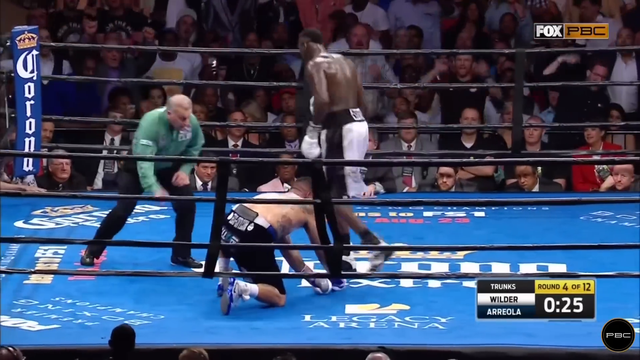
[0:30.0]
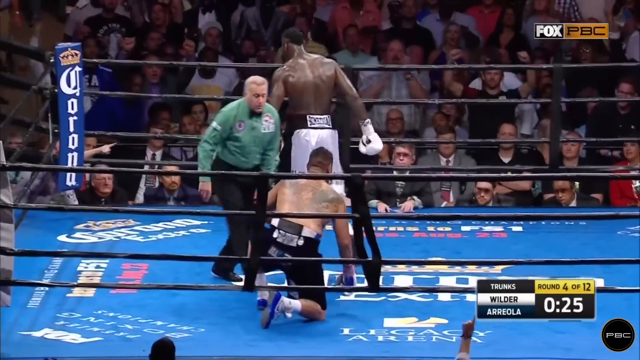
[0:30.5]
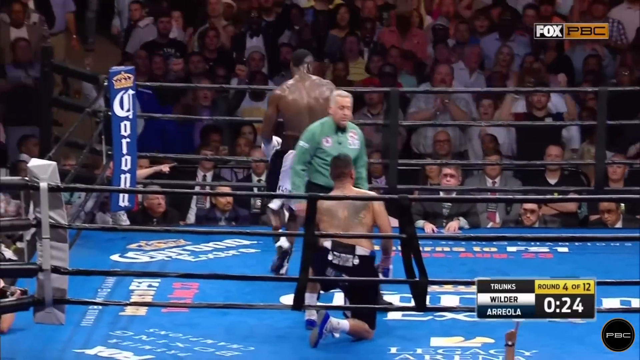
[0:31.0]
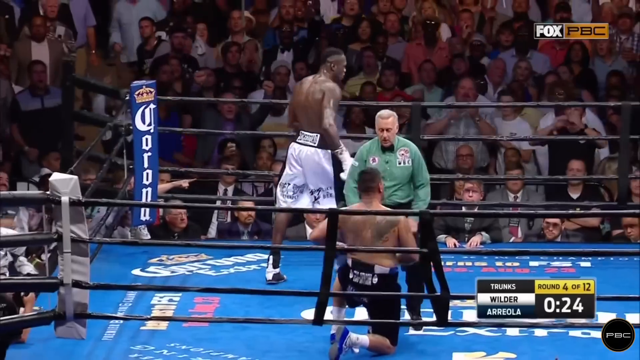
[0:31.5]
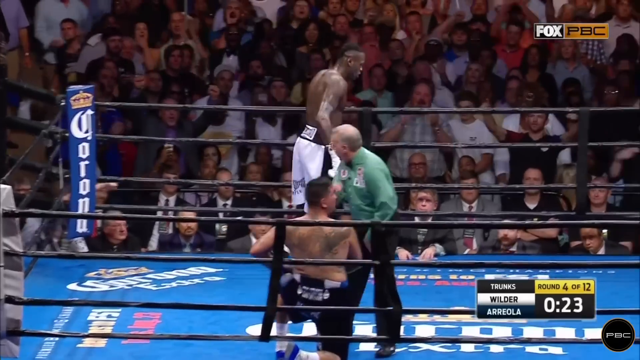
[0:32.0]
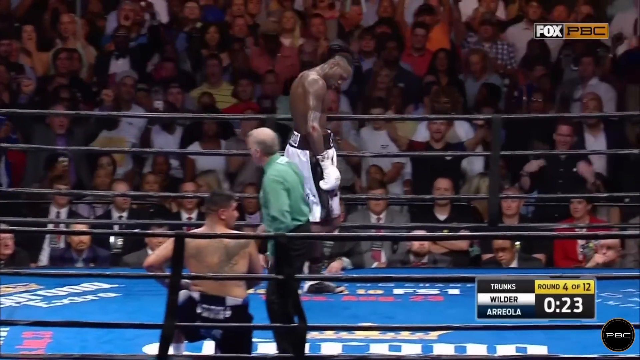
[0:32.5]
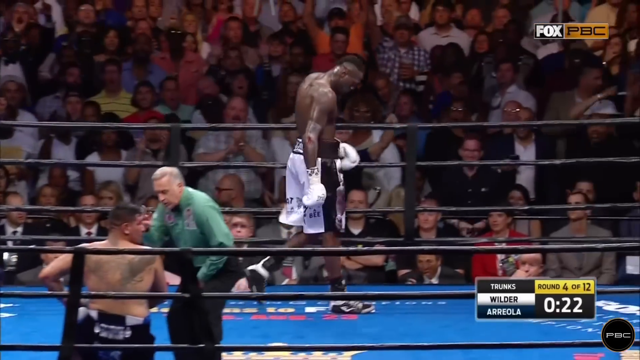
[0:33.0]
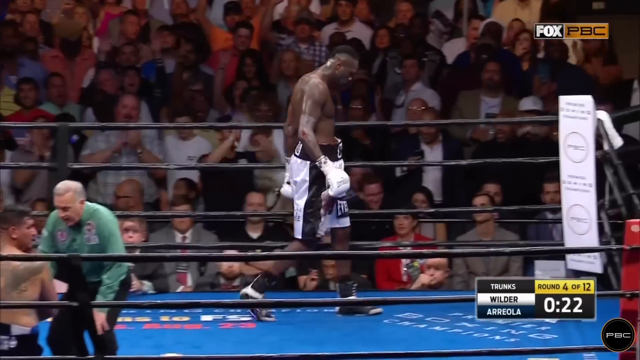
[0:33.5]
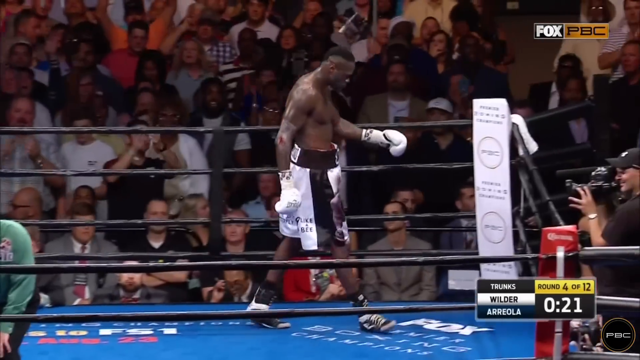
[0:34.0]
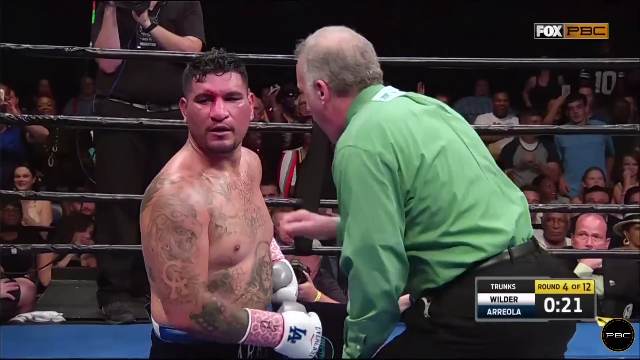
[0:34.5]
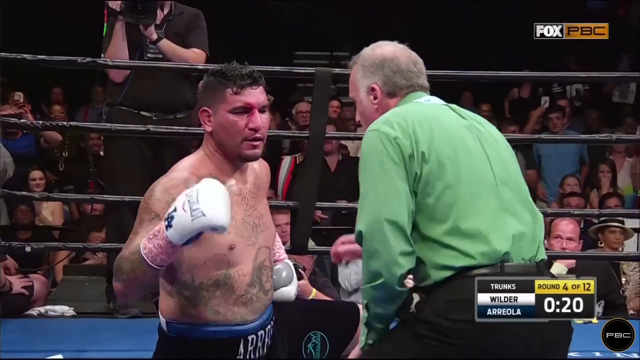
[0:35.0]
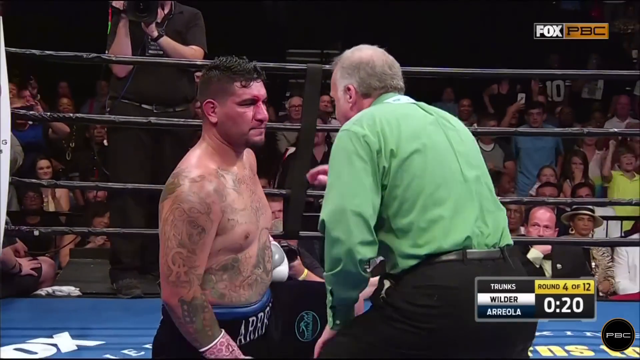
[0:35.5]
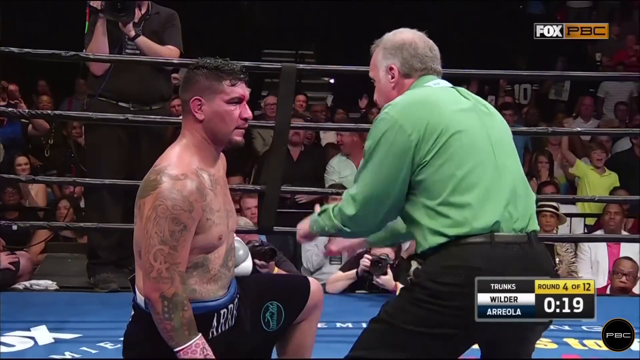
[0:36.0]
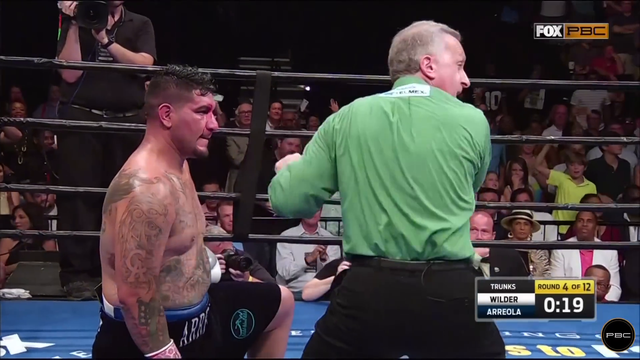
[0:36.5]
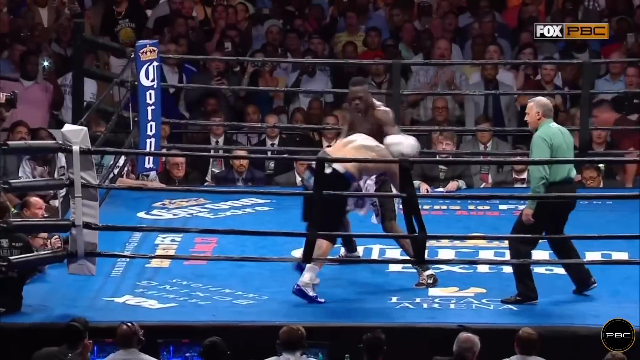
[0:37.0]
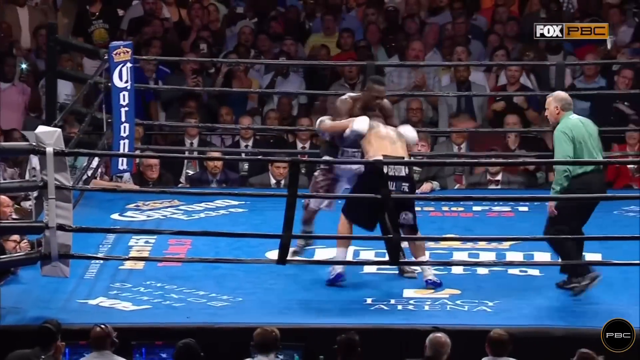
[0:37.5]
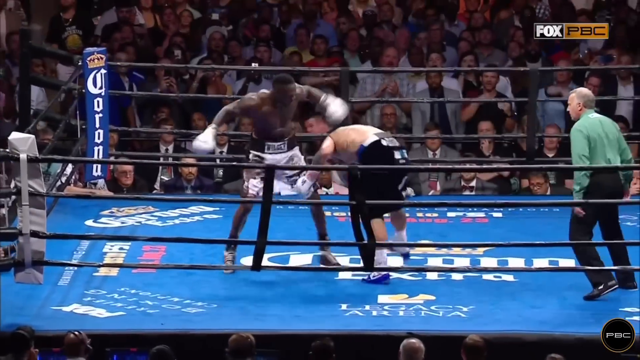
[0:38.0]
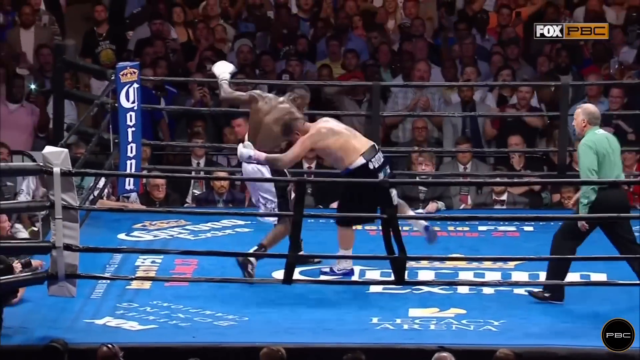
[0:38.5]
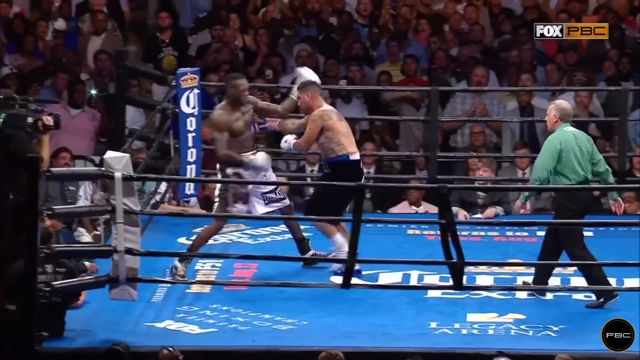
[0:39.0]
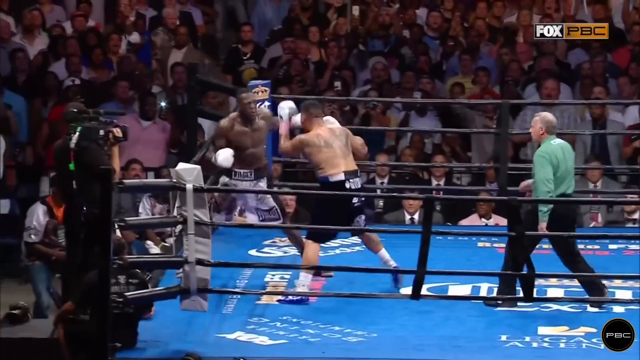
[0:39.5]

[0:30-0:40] The tattooed boxer kneels on the floor with blood streaming down the right side of his face, near the area between his nose and his eye, and he looks a little tired. The referee walks up to him and shows his fingers, counting from five to six, and the boxer lifts his glove to indicate he is okay while the African boxer walks around the ring waiting for his opponent to get up. Another series of blows from the African boxer to the tattooed boxer is shown. An advertisement for Corona is on one of the ring posts, with a blue background, the word "Corona" written vertically, and a crown at the top. The match timer shows 25 seconds, then 20, then 19.